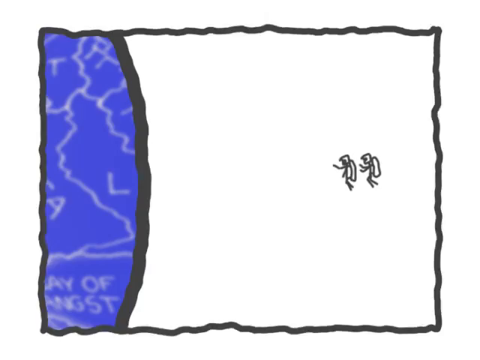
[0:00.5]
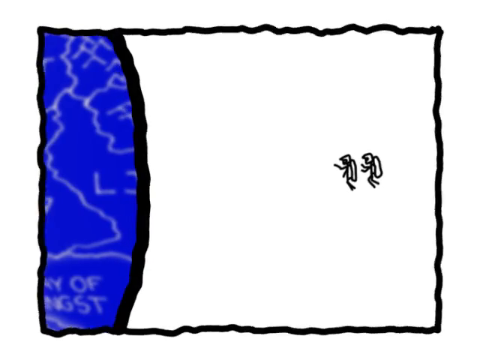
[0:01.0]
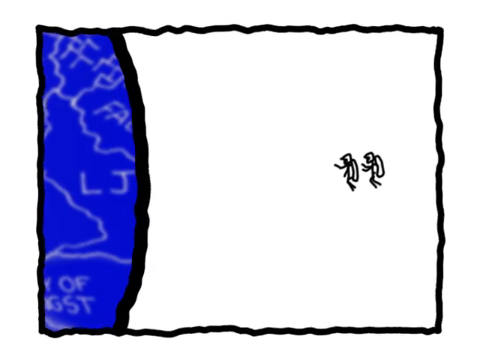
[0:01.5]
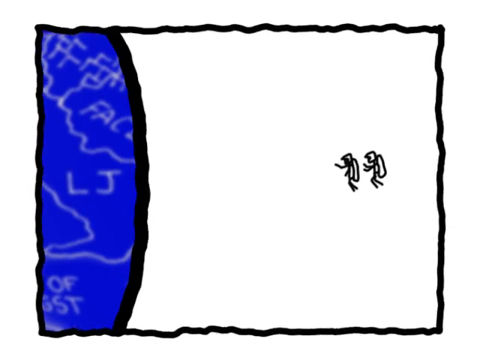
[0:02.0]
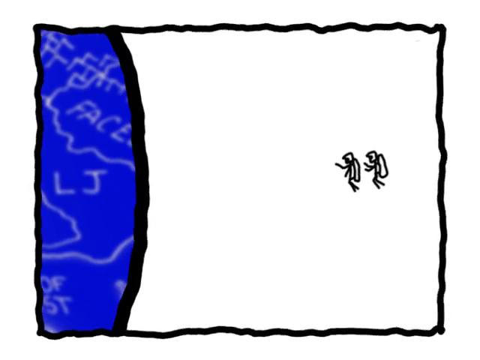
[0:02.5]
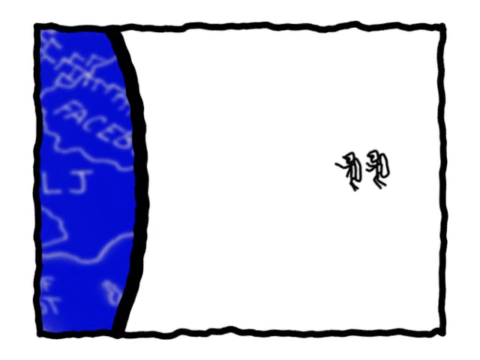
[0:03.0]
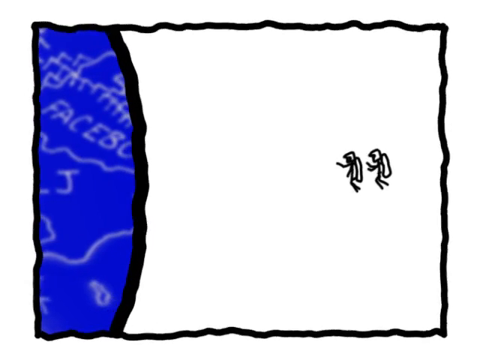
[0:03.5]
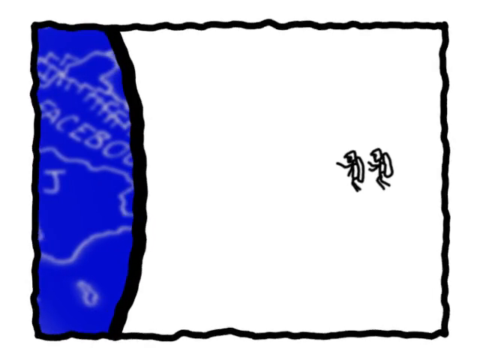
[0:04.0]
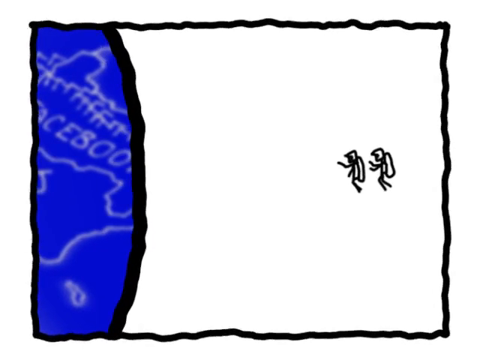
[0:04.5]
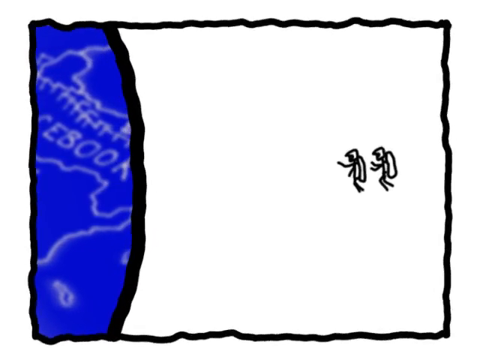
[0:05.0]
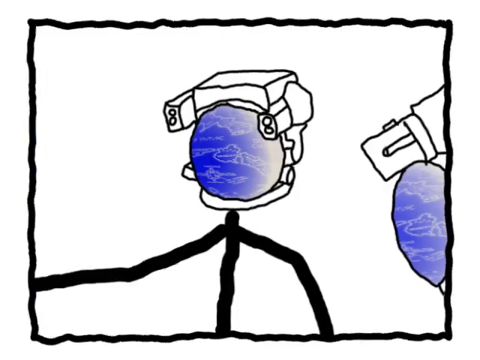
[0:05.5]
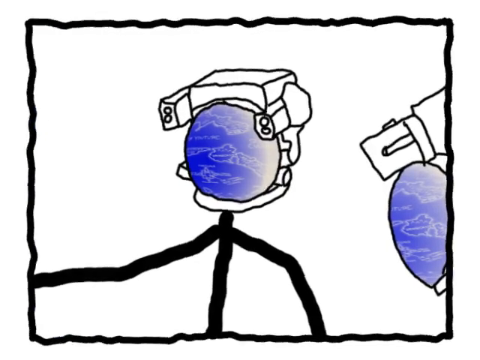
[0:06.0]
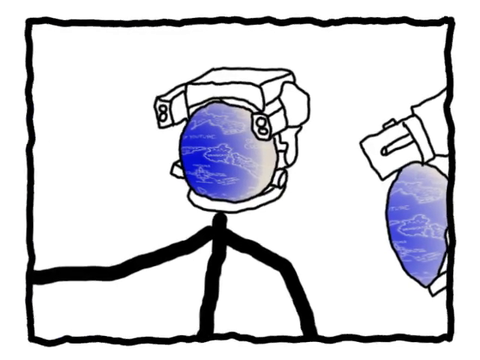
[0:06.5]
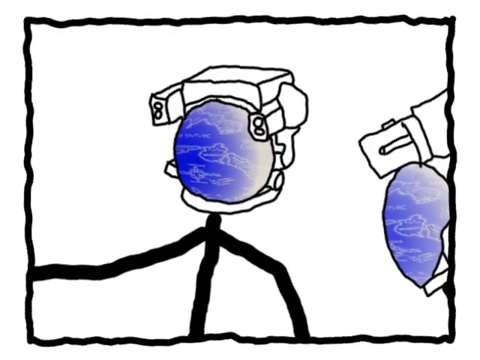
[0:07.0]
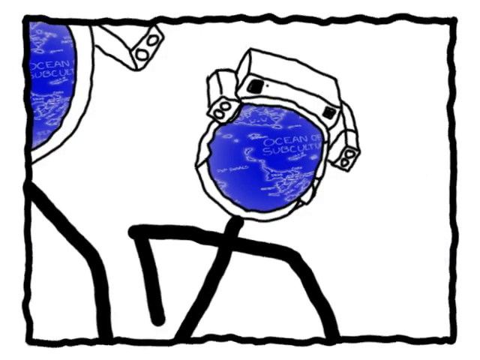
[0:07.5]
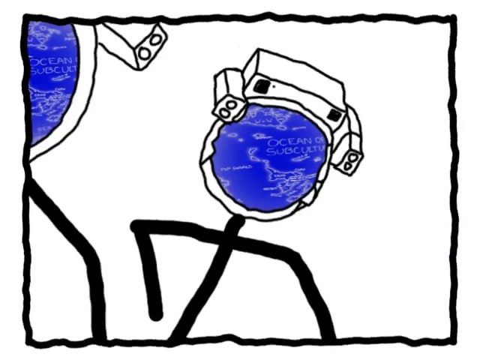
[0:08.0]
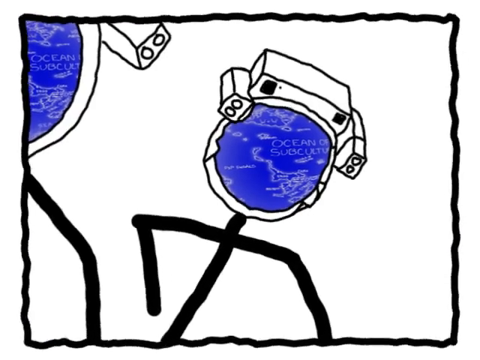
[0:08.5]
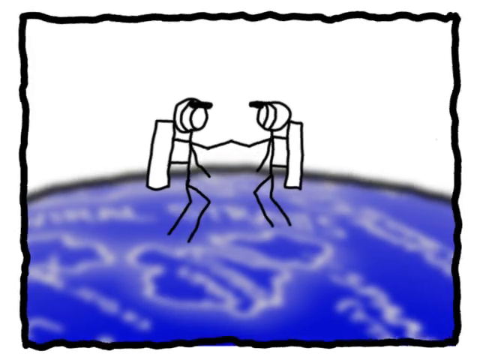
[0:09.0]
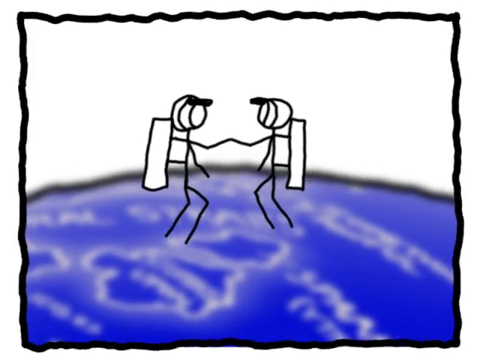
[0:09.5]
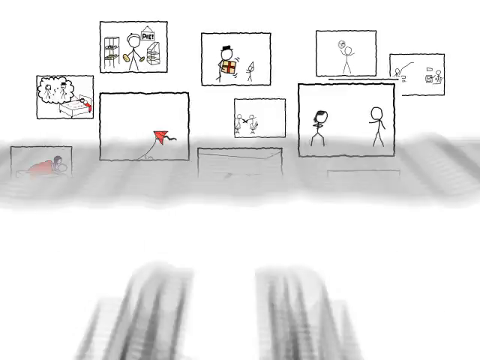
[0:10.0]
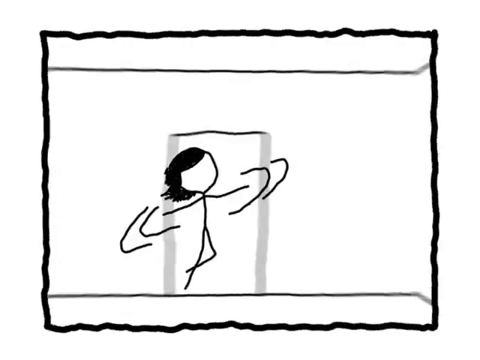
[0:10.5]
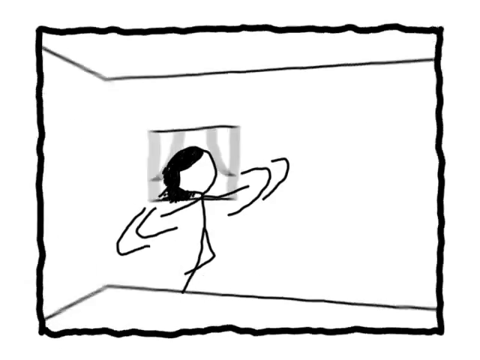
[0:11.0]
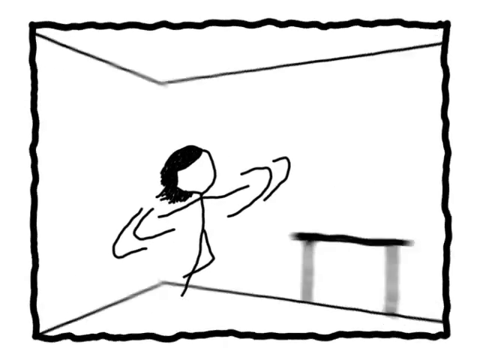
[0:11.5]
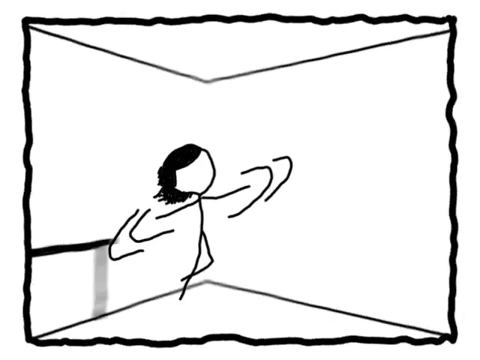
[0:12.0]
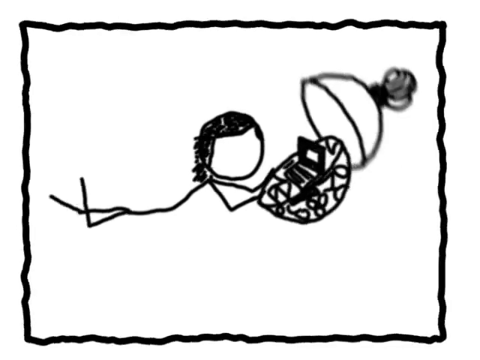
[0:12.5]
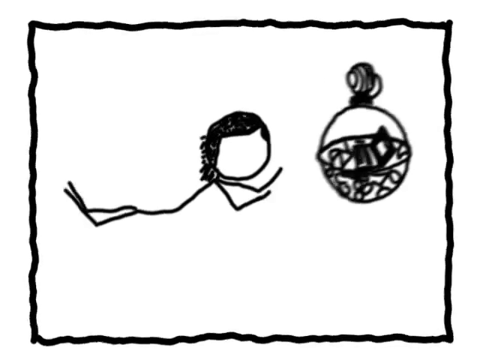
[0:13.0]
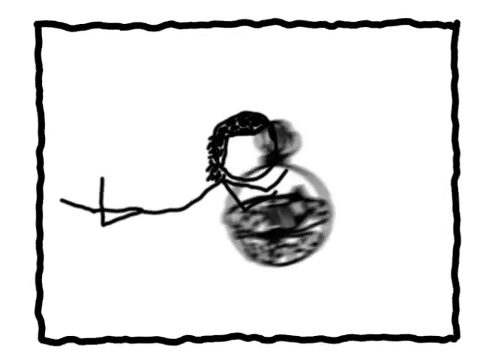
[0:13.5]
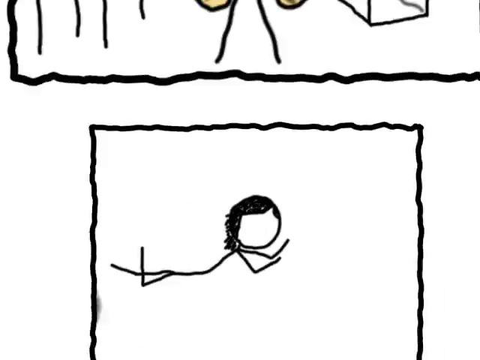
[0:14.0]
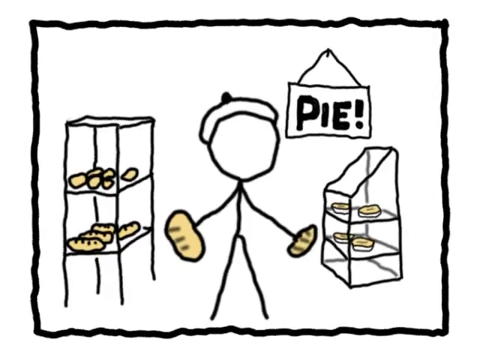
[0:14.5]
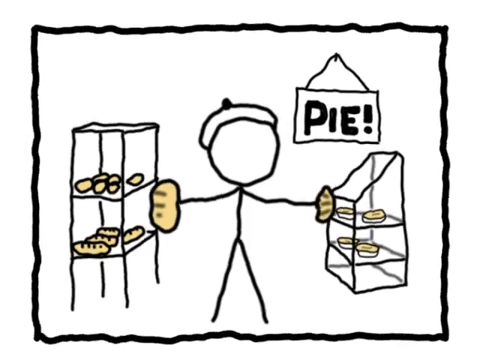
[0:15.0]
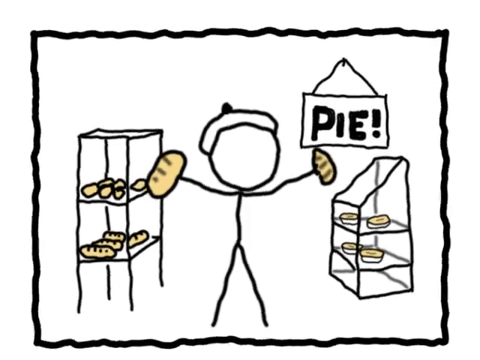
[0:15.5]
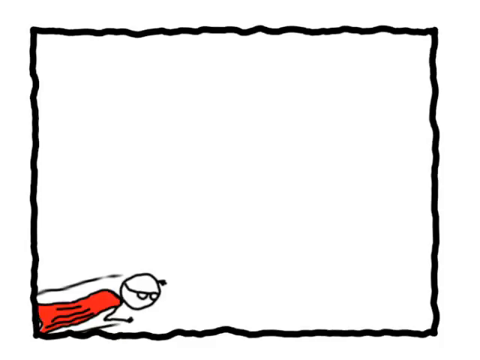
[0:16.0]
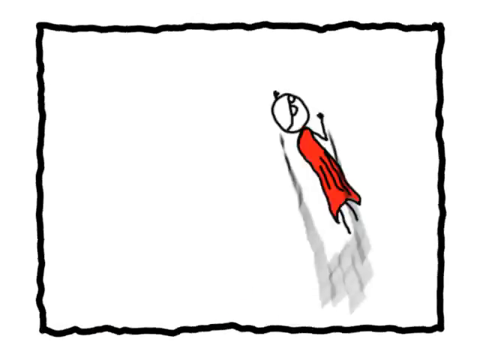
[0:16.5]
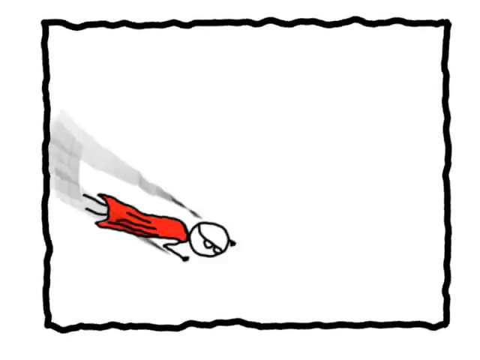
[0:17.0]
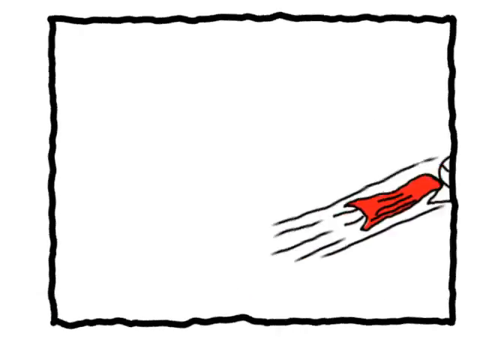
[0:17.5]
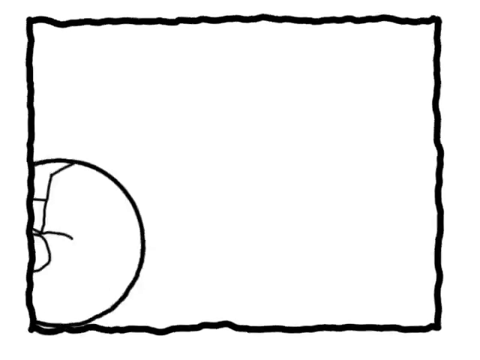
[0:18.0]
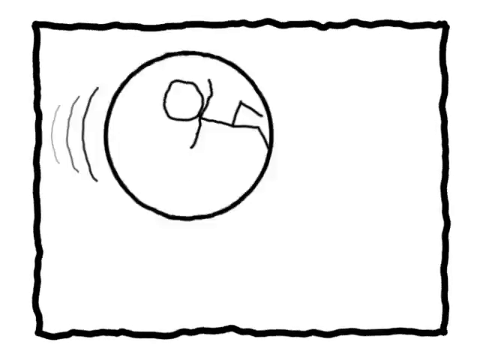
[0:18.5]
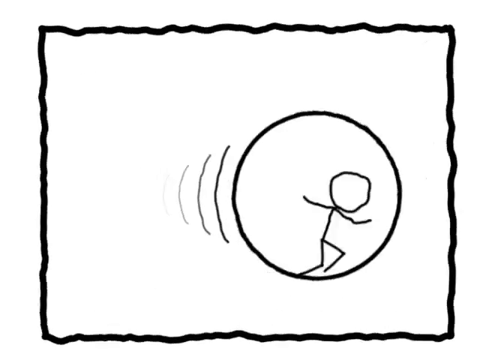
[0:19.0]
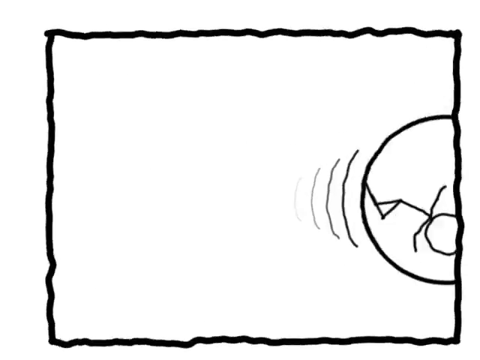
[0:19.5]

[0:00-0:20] A hazy, wiggly screen appears. About three quarters of it, toward the right, is a white background, while the remaining quarter on the left-hand side is blue with wiggly white lines and letters through it. The border is wiggly and black, and a thick black line separates the white area from the blue. Two characters appear from the middle right-hand side of the screen: stick men with backpacks on their backs, each with two stick legs and two stick arms. The screen then changes to a close-up view of the two characters' heads, which are round and blue with wiggly white lines inside. The blue shading is like an ombre, starting deep blue and fading to white from the left to the right of the face. They have equipment on their heads: a rectangle box on the head, with two rectangle shapes coming out toward the front on either side of the top of the head. The device goes around their necks, and their bodies are drawn as black-line stick men. They move in a hazy mist. The scene then changes to a zoomed-out view showing a planet in the bottom half of the screen, with the two stick men floating side by side, facing each other.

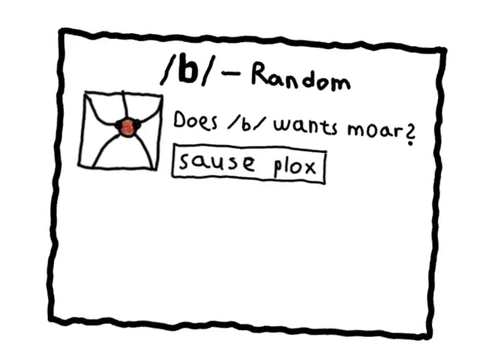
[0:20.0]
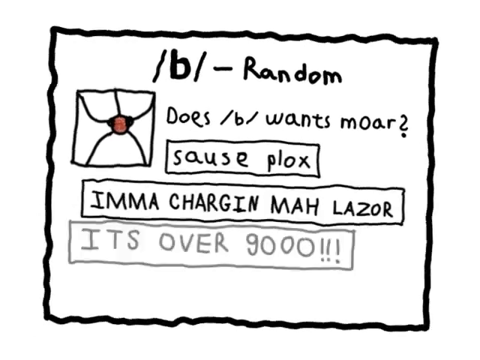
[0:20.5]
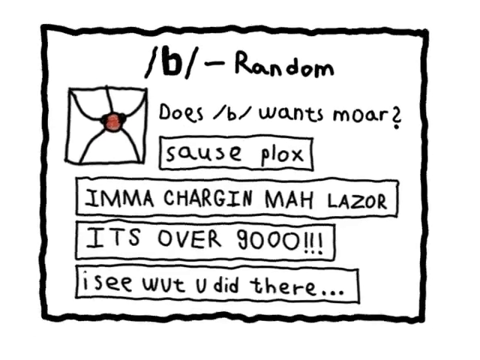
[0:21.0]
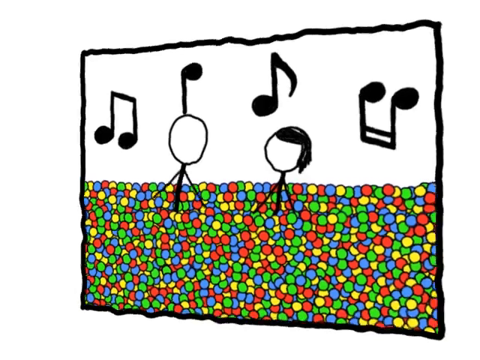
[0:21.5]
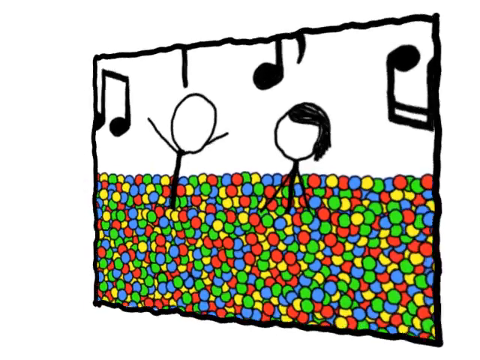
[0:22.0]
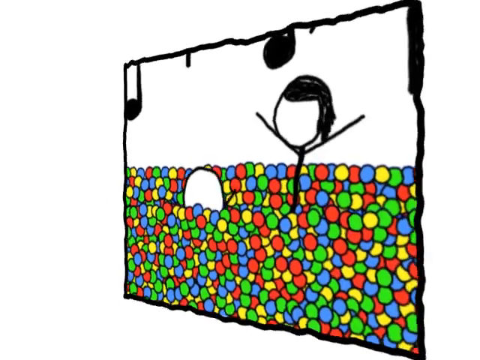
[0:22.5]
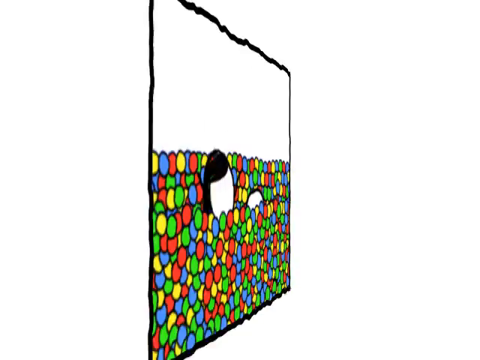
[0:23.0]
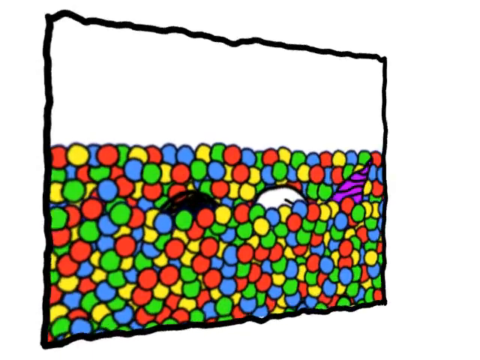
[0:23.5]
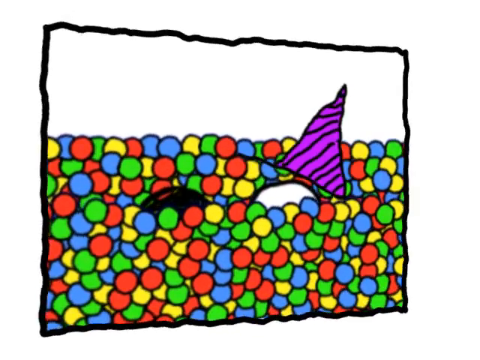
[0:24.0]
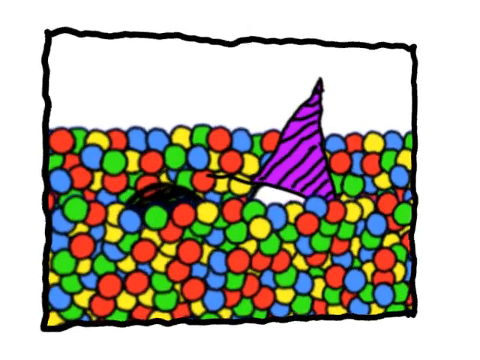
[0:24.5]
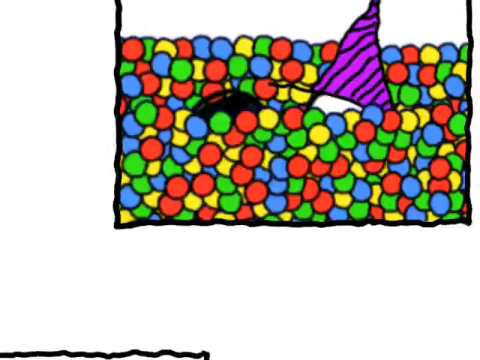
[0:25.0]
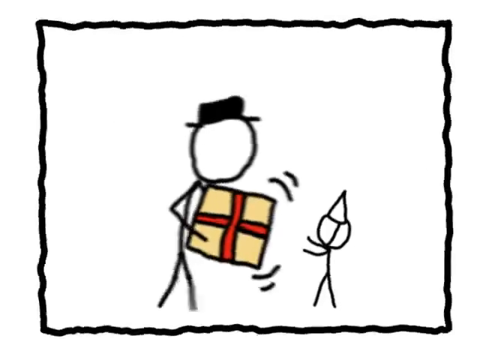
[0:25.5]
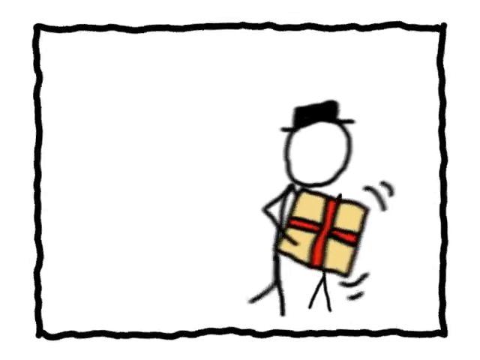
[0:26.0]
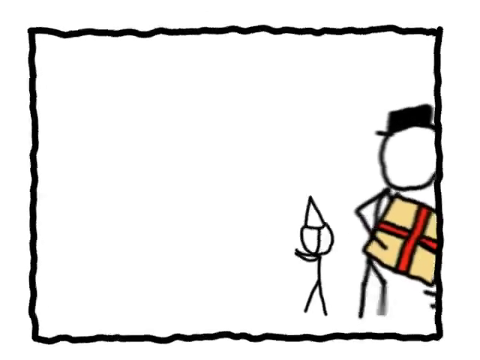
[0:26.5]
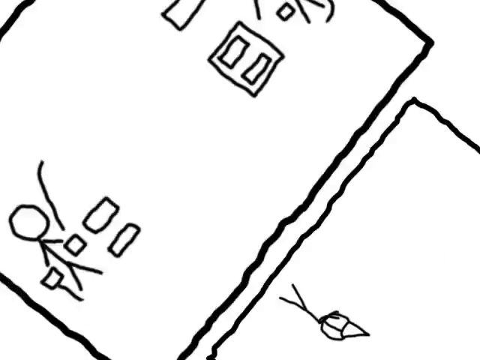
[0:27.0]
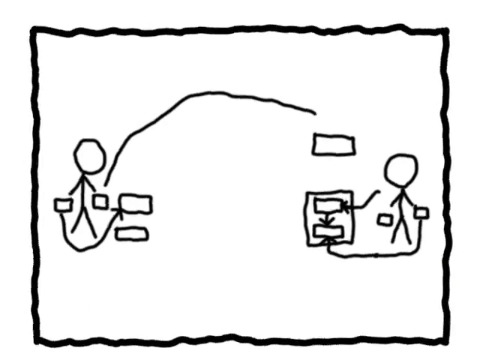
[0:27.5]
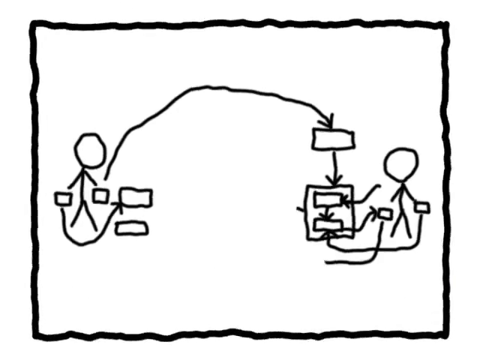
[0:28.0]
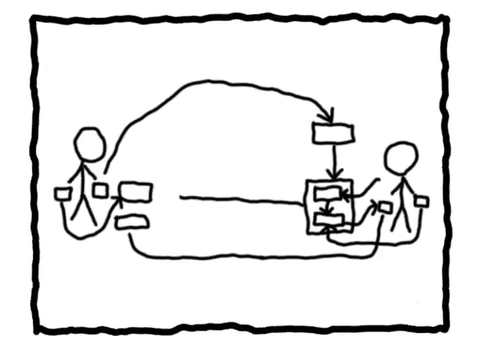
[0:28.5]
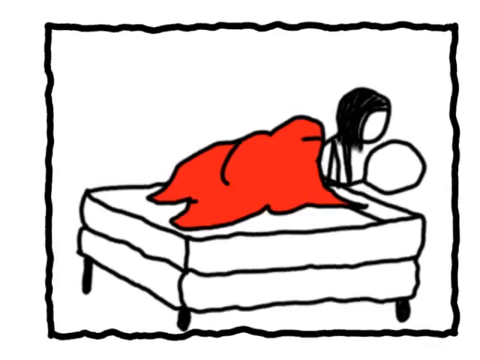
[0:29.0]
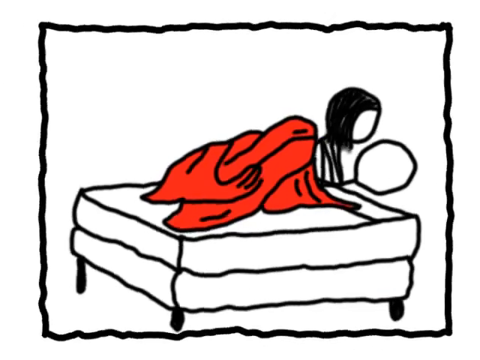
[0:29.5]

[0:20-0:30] The wibbly black border surrounds a white background. In the upper left-hand corner is what looks like a drawing of an envelope, and to the right of it are three lines of words. The top line says "/b/ equals random". Below it, in a thinner font, it says "does /b/ wants moar?". Below that is a drawn black box with a white background that says "source plox". More writing boxes then appear below, in the bottom section of the screen. A paler black drawn box says "Imma charging my laser". Two more boxes appear below that, now taking up the whole screen: the first says "its over 9000!" three times, and the box below it says "I see what you did the...". The scene then changes completely. The upper half has a white background, the border is still black hazy wiggly lines, and the bottom half is filled with lots of coloured balls in red, green, blue and yellow. Two stick men are side by side: the one on the left has a round head with no hair, and the one on the right has black hair. They are in the balls, so their legs cannot be seen. Above their heads, going from left to right, are four music notes.